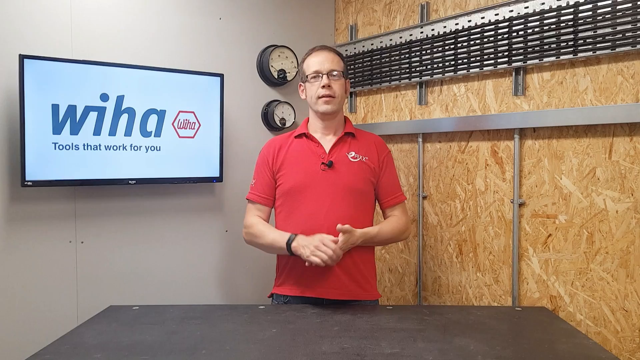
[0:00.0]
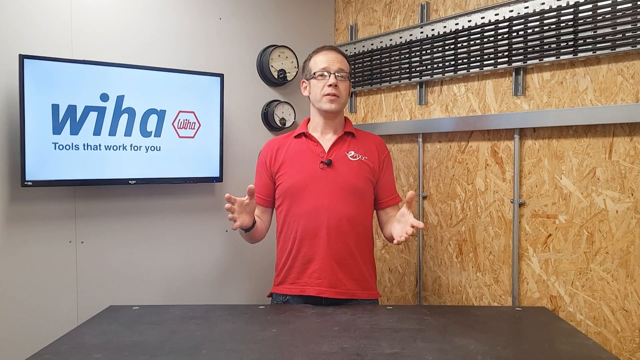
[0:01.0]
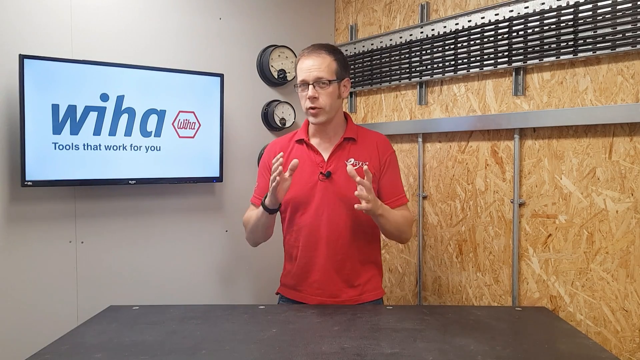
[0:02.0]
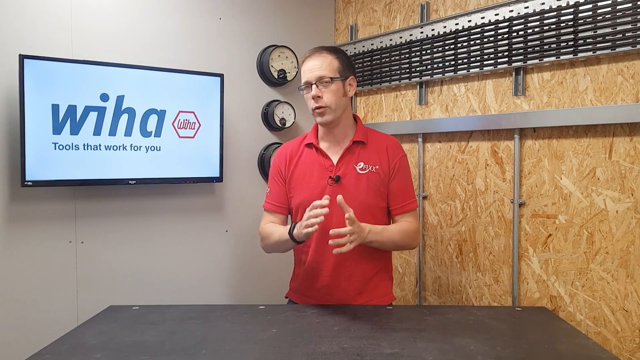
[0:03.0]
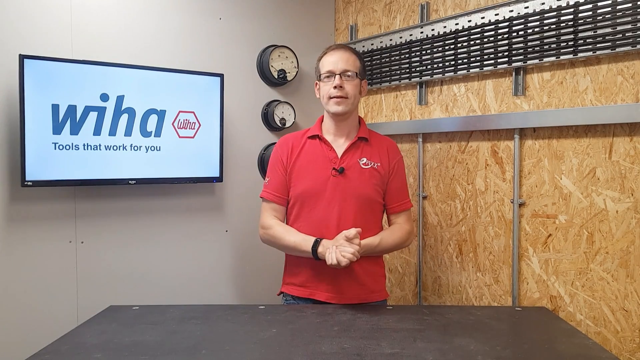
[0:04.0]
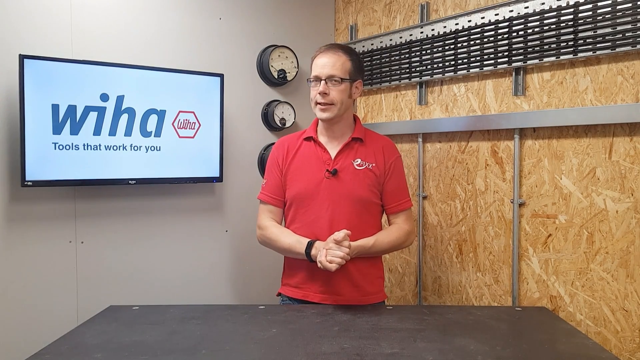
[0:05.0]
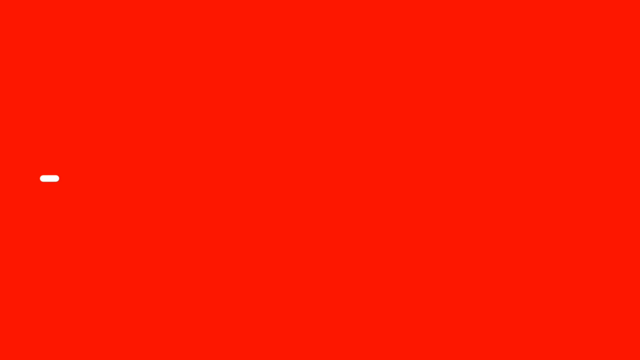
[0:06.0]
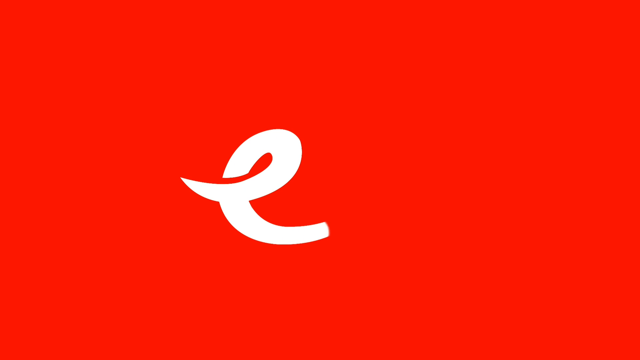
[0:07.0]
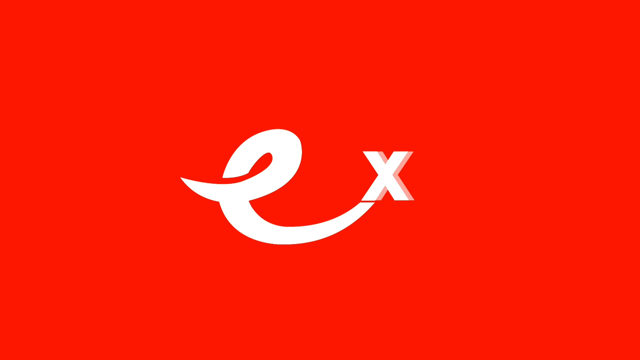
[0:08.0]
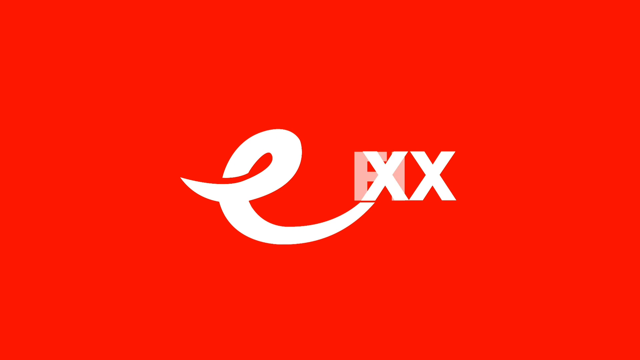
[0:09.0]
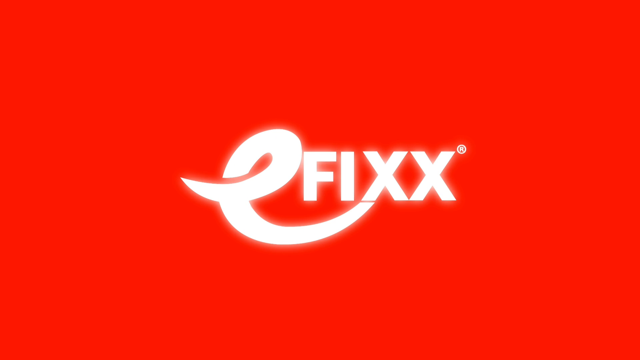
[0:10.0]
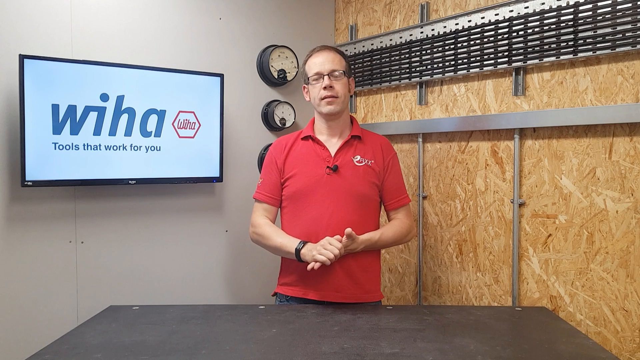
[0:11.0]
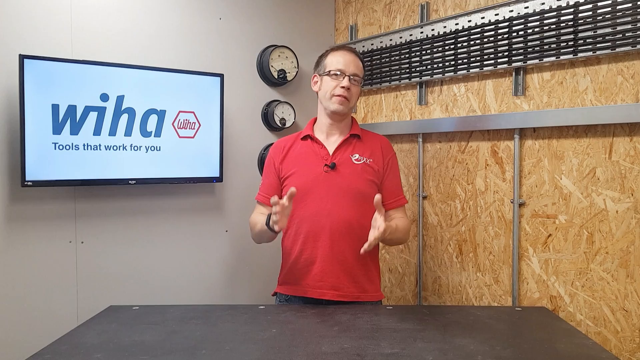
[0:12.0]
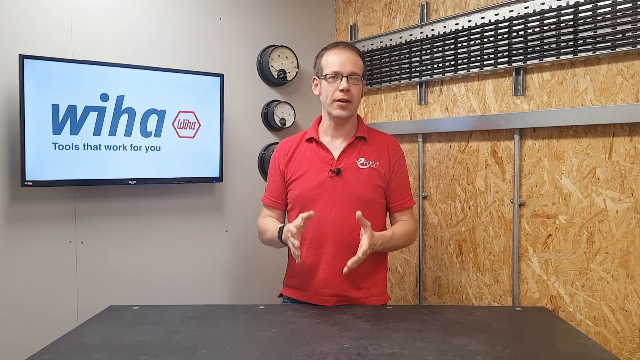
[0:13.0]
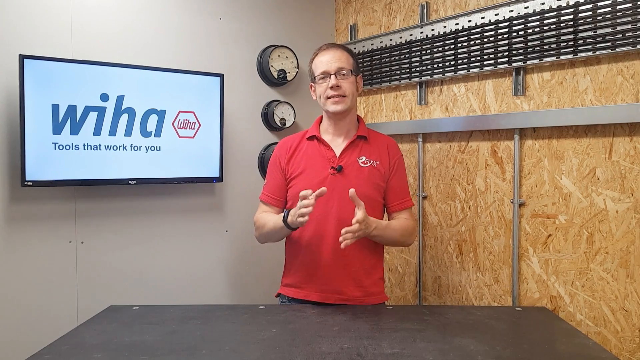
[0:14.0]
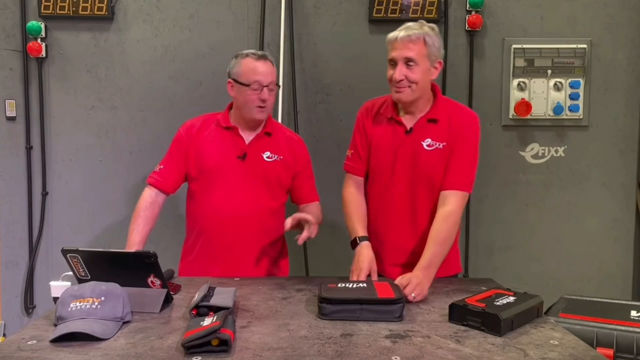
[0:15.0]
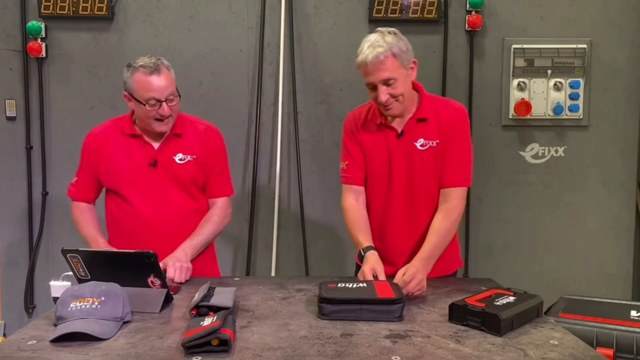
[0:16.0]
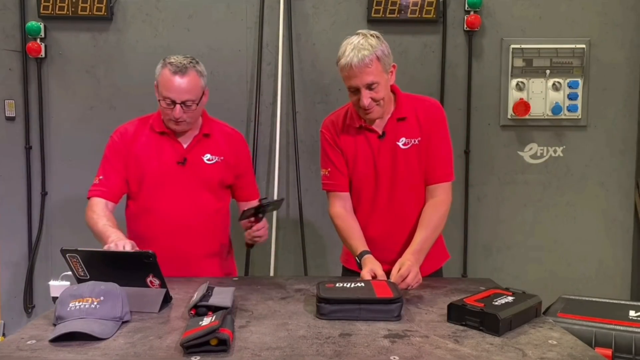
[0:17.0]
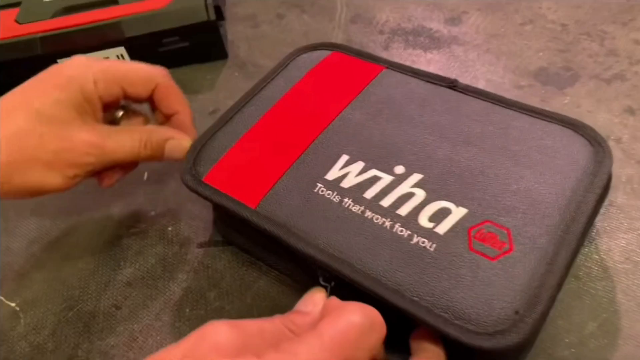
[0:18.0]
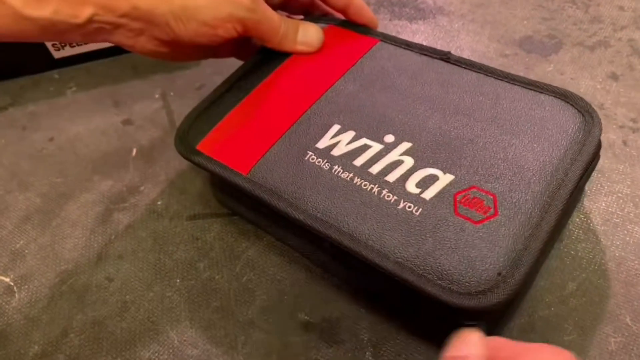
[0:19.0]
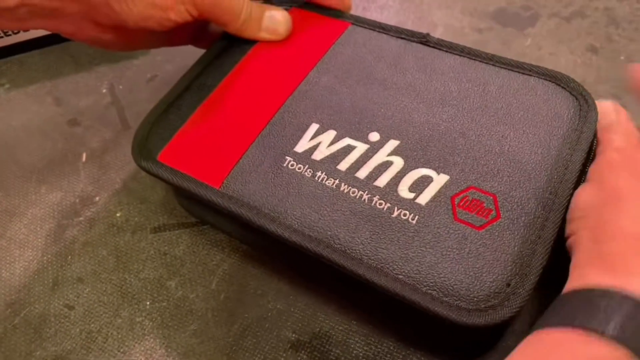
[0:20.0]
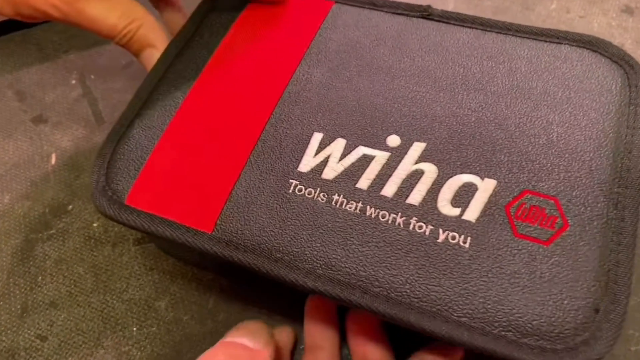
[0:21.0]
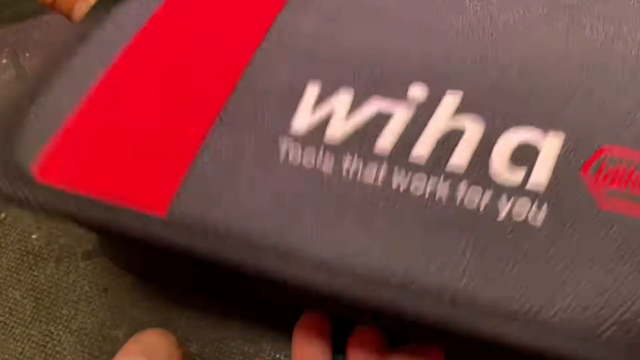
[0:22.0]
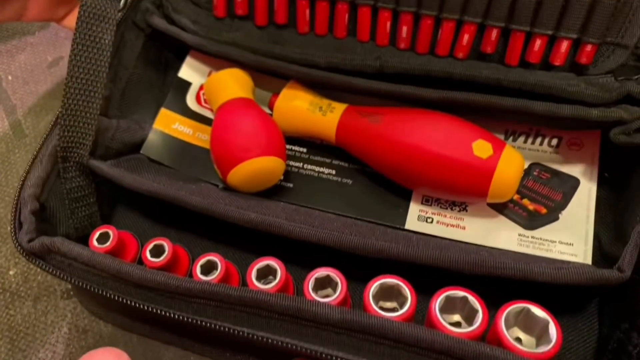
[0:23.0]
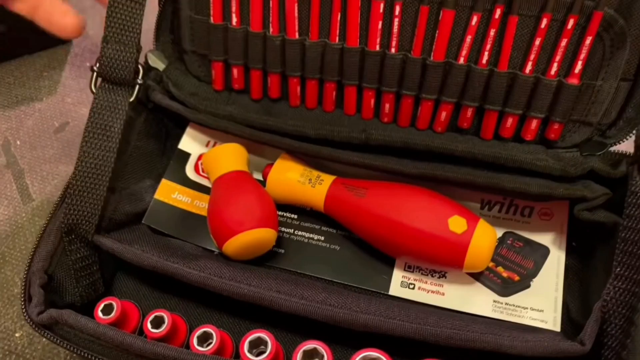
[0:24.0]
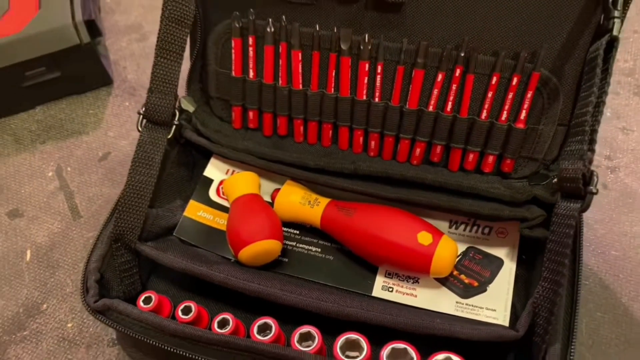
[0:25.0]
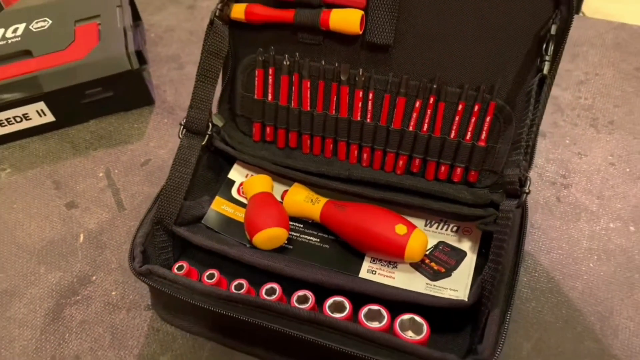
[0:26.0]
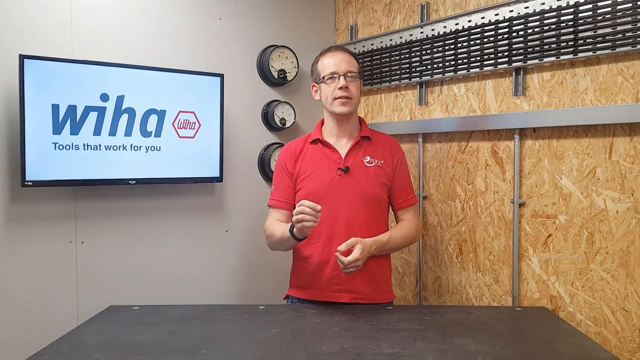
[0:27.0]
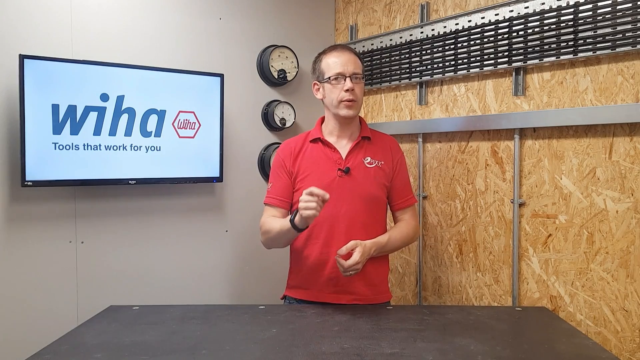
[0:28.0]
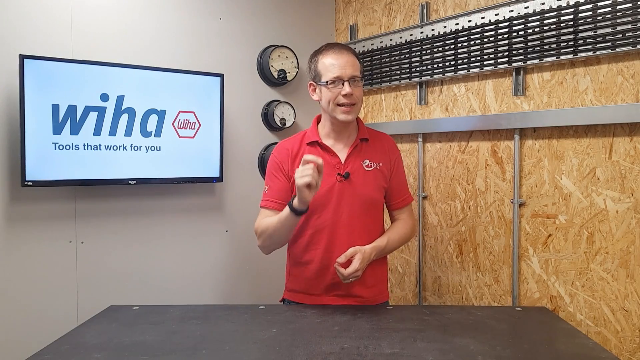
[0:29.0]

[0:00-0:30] A man in a red t-shirt appears to be presenting some kind of product or service. He stands in front of a TV screen that reads "Wiha" and then "tools that work for you." He is next to a fresh-cut board with some racks up on the side. The man then seems to talk more about a service. On the next screen, two adult men appear, both in red t-shirts; one stands in front of a computer screen and seems to have some kind of tool there. On the wall there are timers, a green bulb and a red bulb, and a couple of dials on the right-hand side of the back wall. It looks like a demonstration of tools from Wiha, with the text "tools that work for you." A small carry kit is opened to reveal a little screwdriver set with several different types of bits. The view returns to the first man, who appears to be talking about the tools. The video looks like a product demonstration of heavy-duty screwdriver sets in this kit.